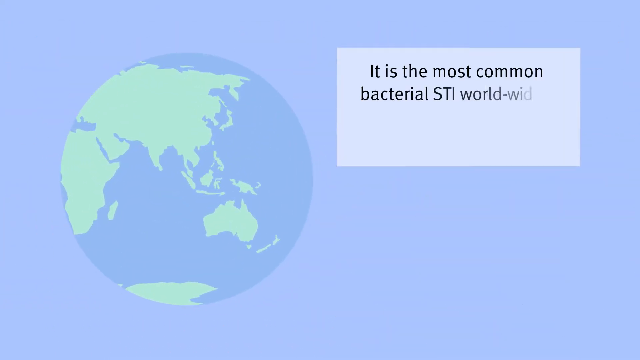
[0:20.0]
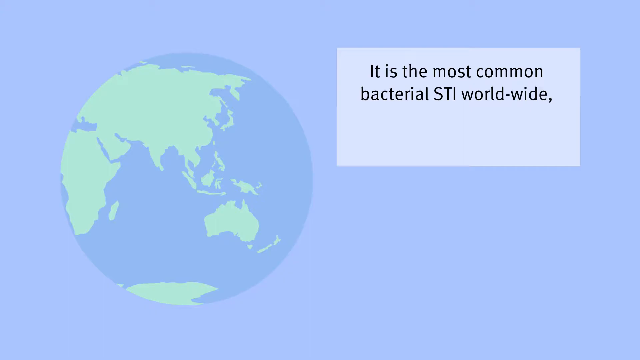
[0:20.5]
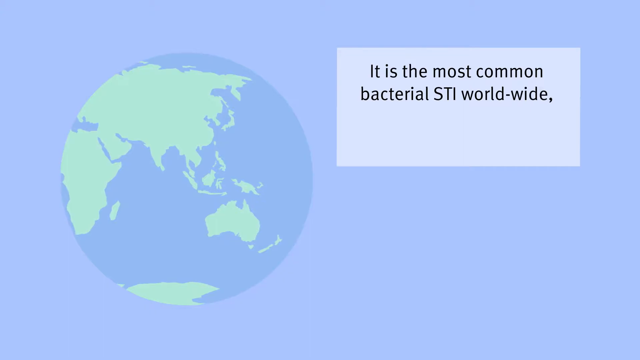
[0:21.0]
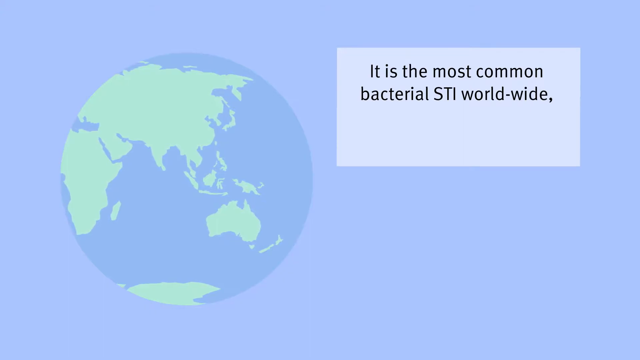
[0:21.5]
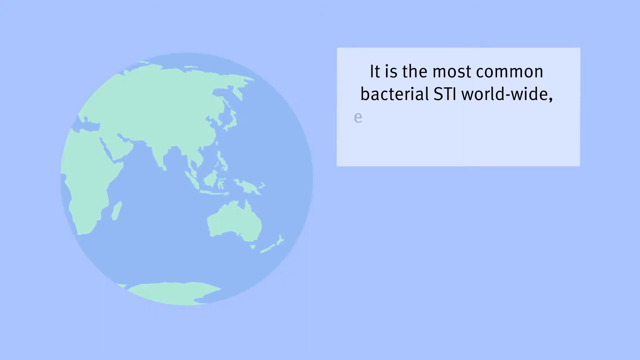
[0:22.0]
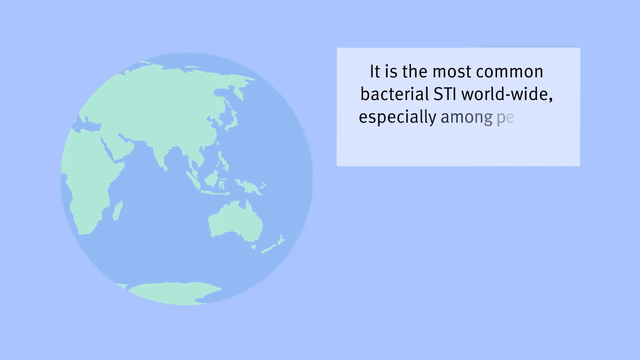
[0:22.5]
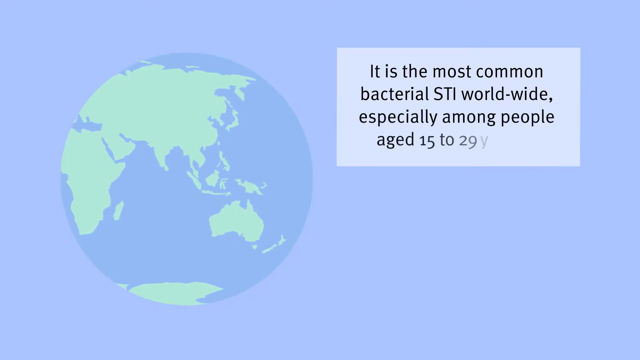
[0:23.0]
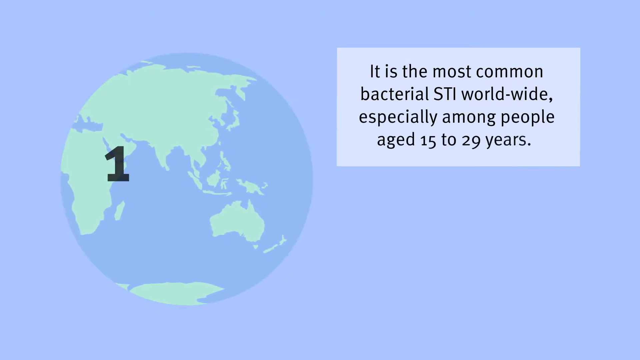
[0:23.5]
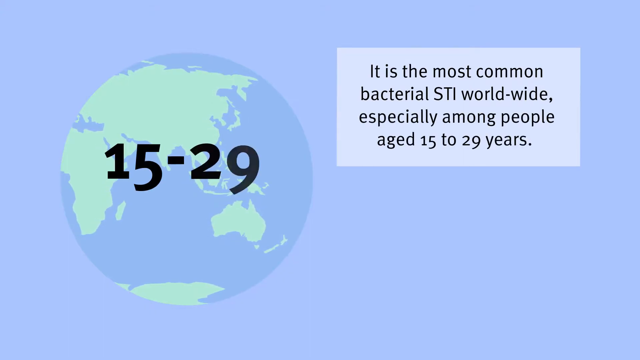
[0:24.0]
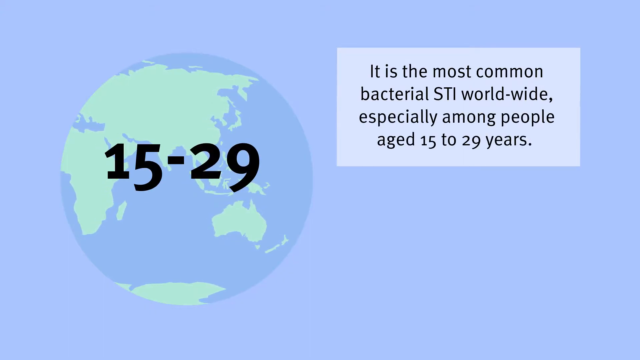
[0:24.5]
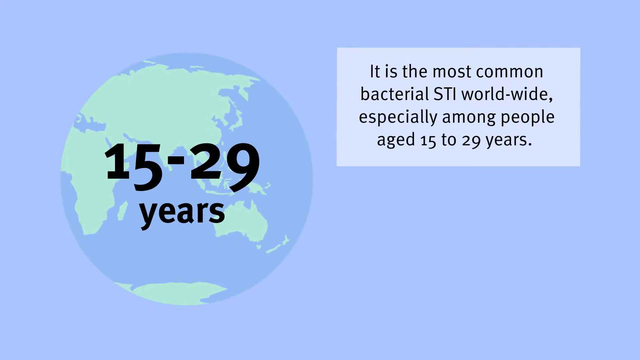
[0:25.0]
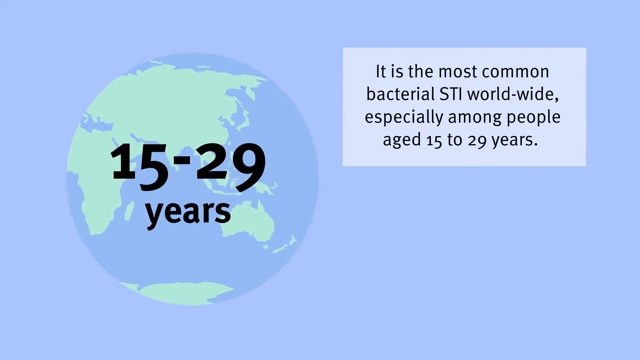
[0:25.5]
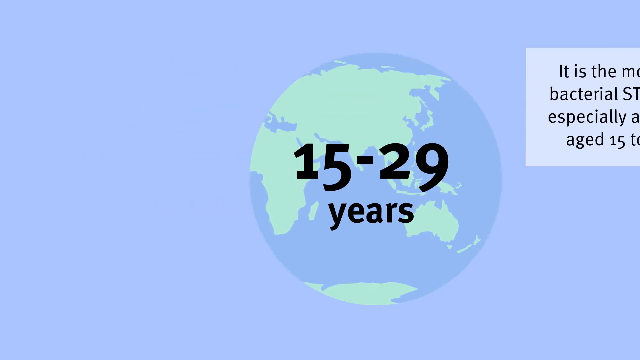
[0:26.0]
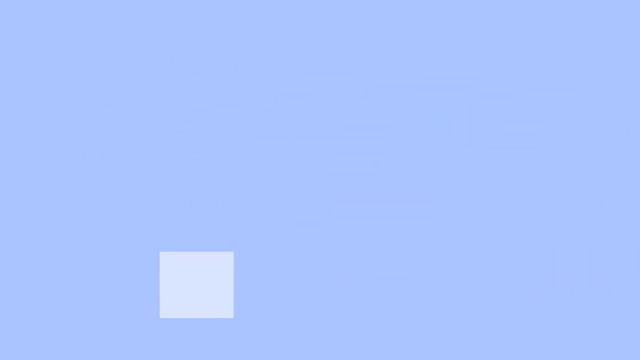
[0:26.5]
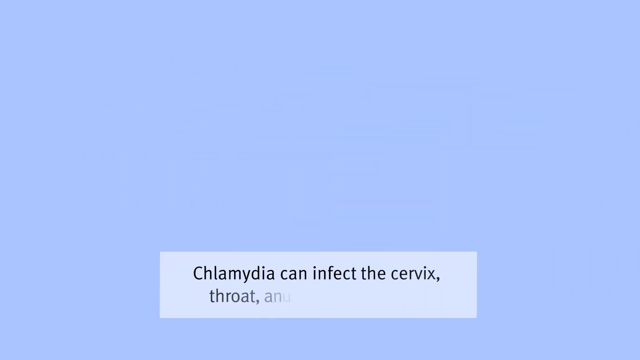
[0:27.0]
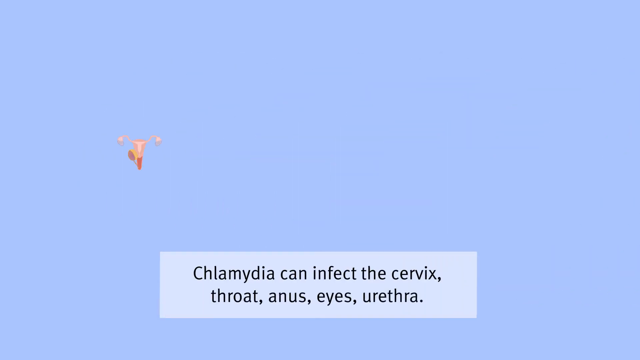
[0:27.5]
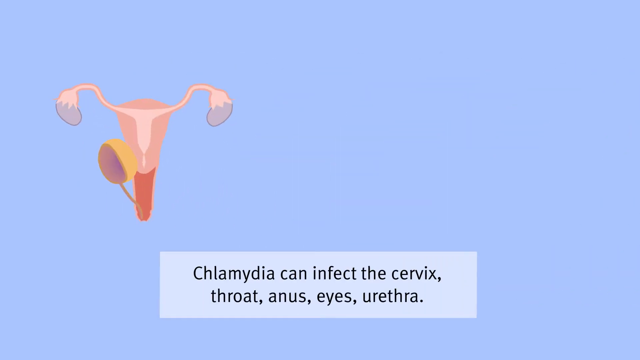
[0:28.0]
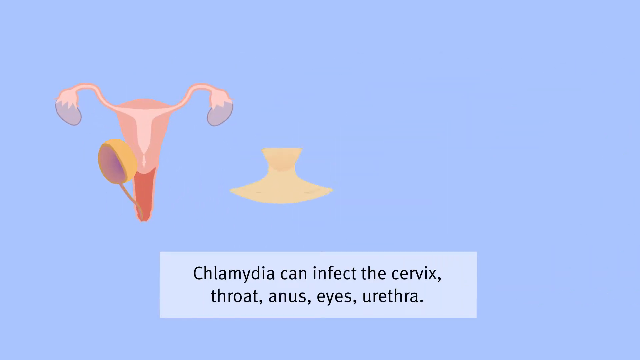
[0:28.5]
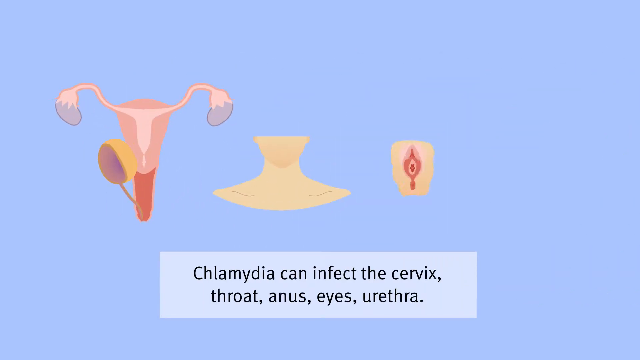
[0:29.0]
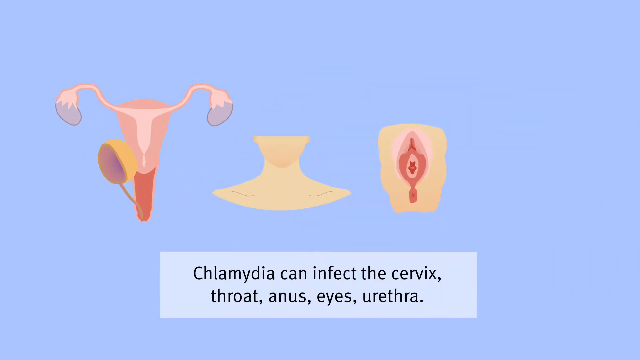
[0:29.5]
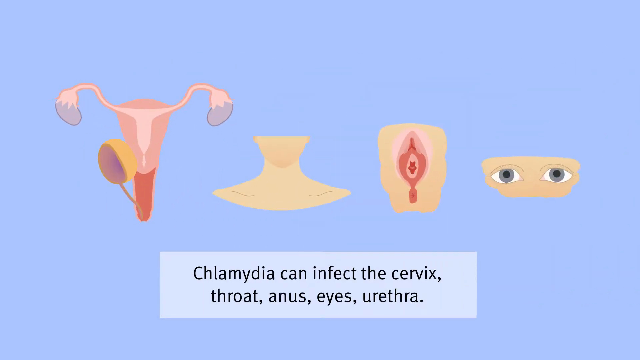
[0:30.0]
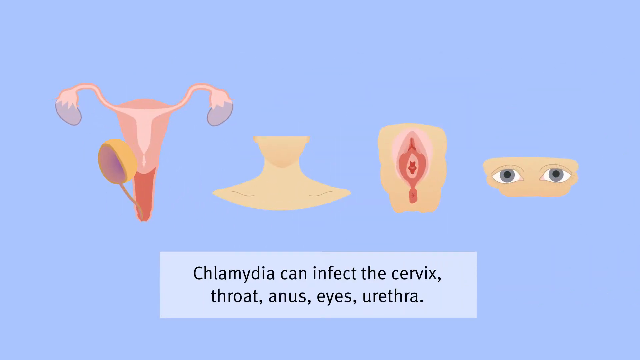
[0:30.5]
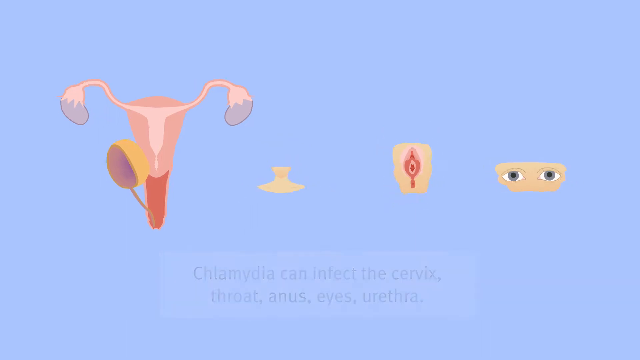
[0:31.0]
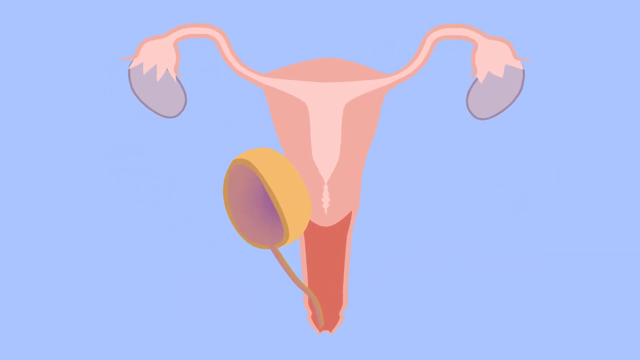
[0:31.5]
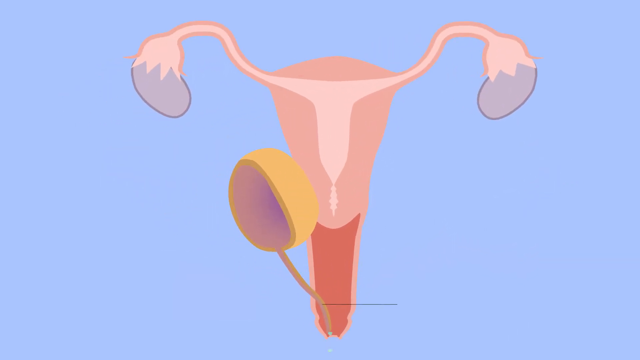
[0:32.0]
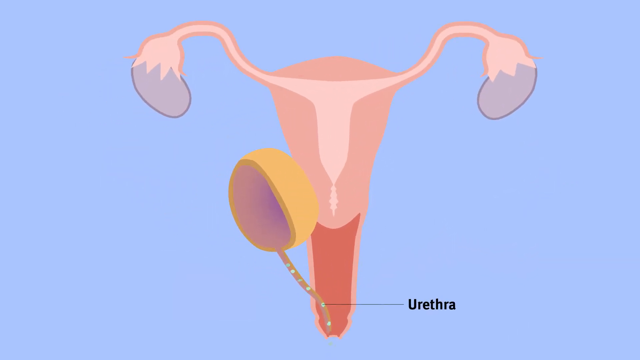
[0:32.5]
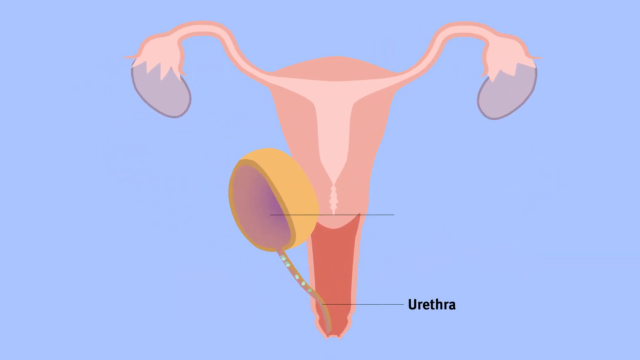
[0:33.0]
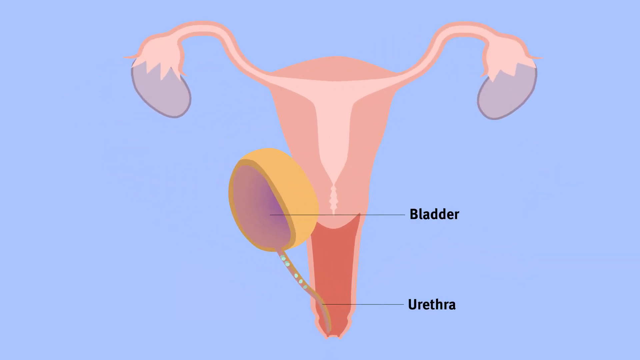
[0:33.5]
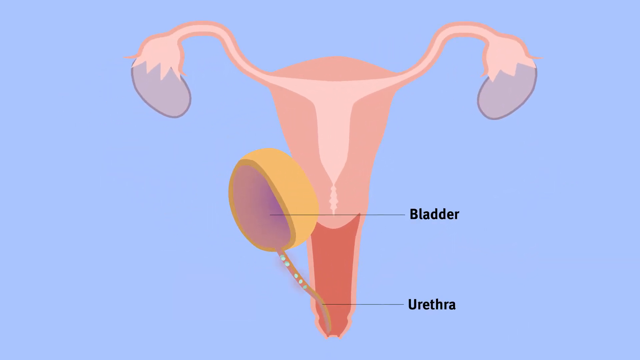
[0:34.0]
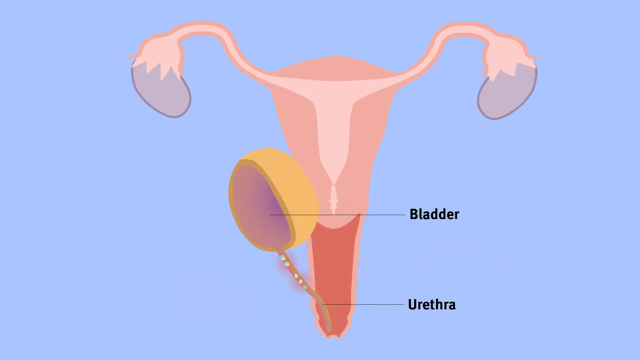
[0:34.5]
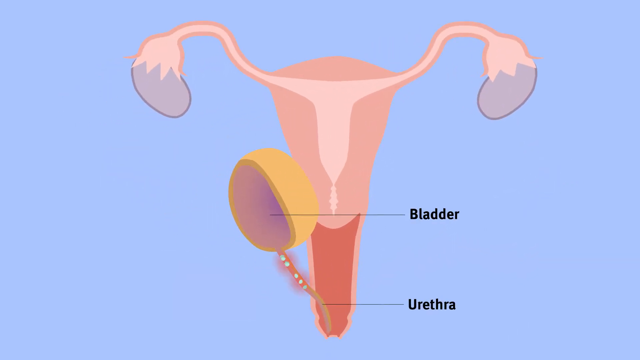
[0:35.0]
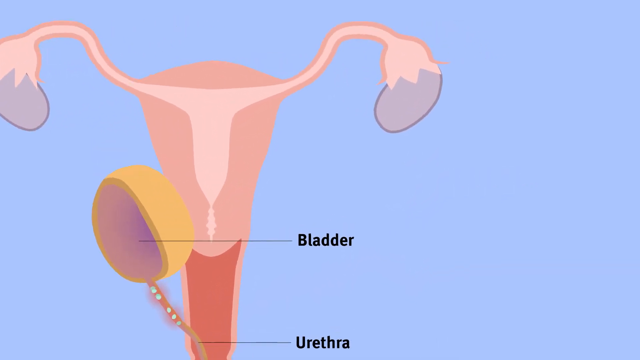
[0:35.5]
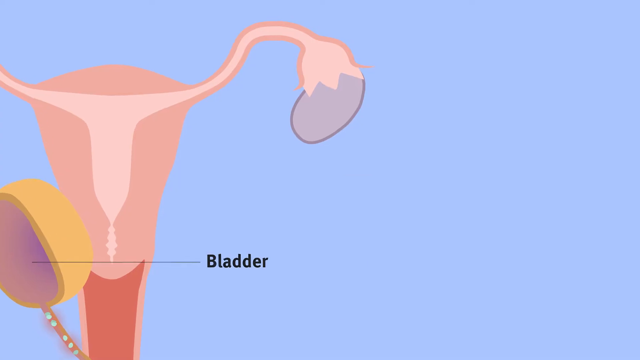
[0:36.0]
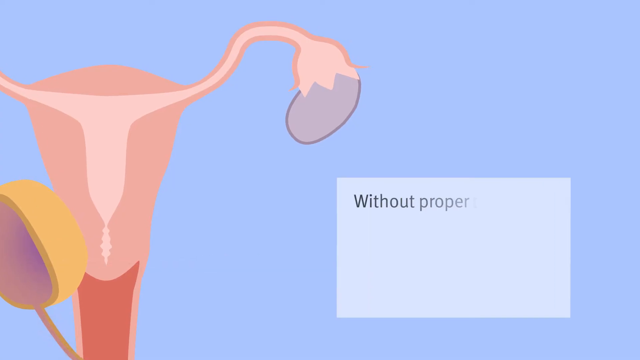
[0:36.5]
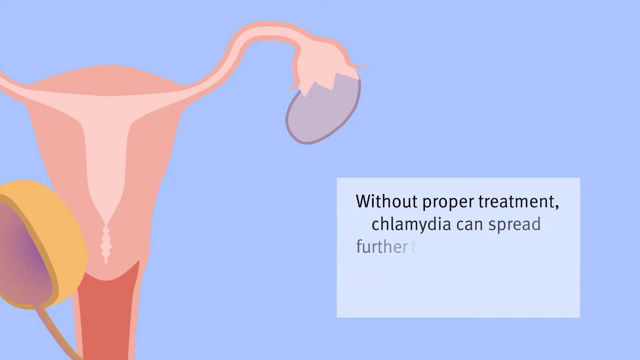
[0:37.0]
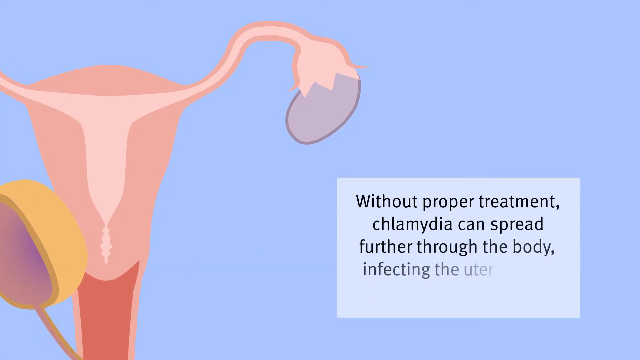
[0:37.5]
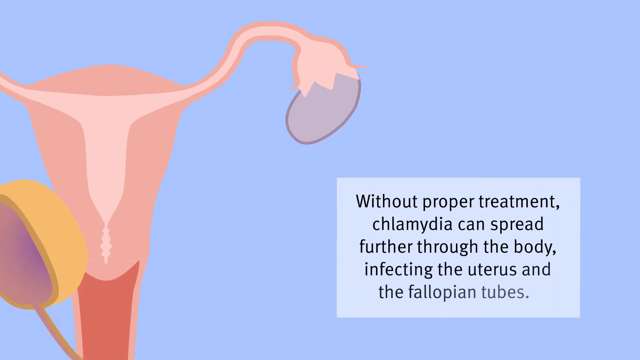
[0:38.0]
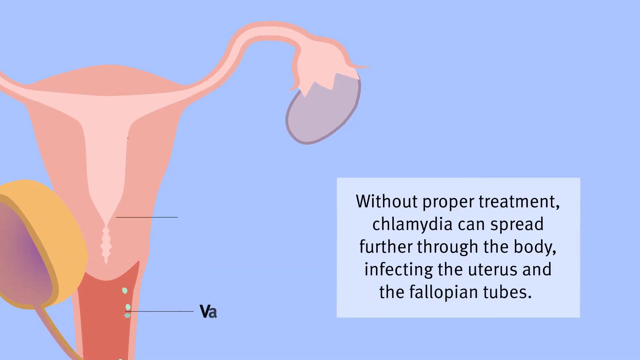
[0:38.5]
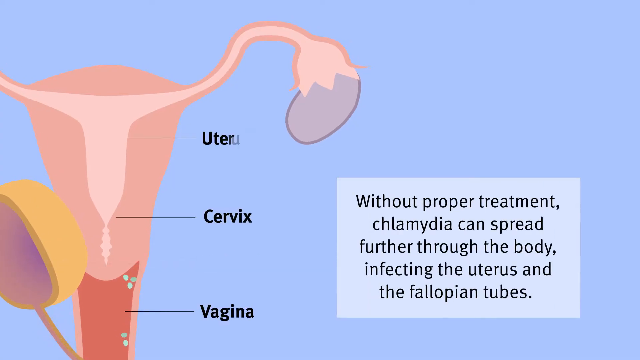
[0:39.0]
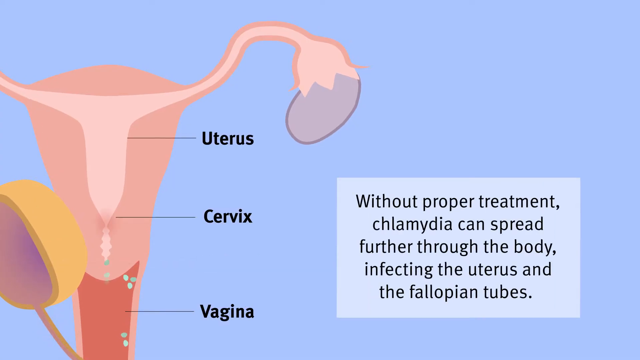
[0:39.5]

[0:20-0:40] The slides have a blue background with cartoon images. A globe is shown with "15-29 years" written across it, and a gray box in the right-hand corner reads "it is the most common bacterial STI worldwide, especially among people aged 15-29 years." Everything then moves off to the right and a new slide pops up with the female reproductive tract on the left and the text "chlamydia can infect the cervix, throat, anus, eyes, and urethra." Next to the reproductive tract is the lower part of a woman or man, showing just the bottom of the face, the clavicle bones, the neck and a little of the chest. To the right of that is a woman's vulva, clitoris and anus.